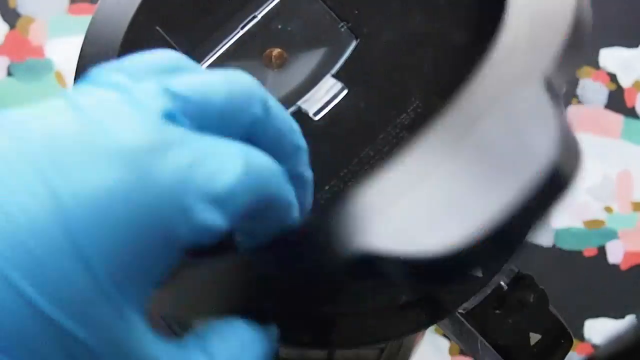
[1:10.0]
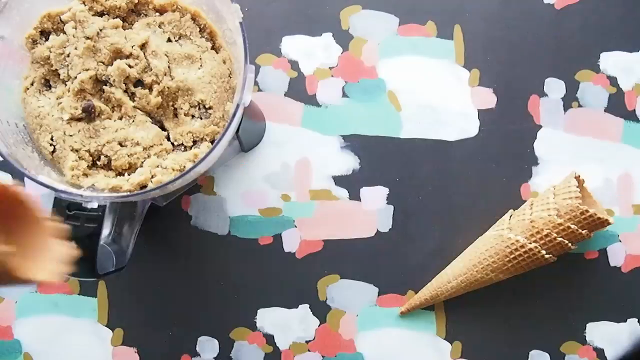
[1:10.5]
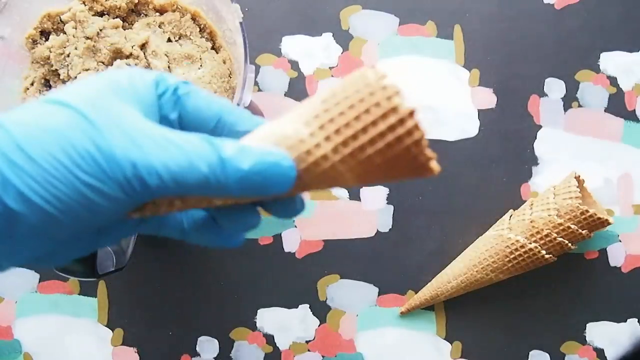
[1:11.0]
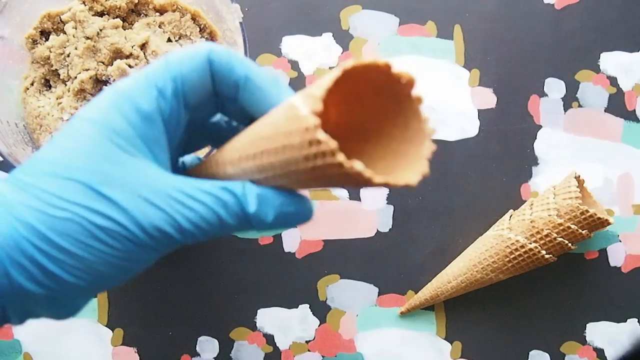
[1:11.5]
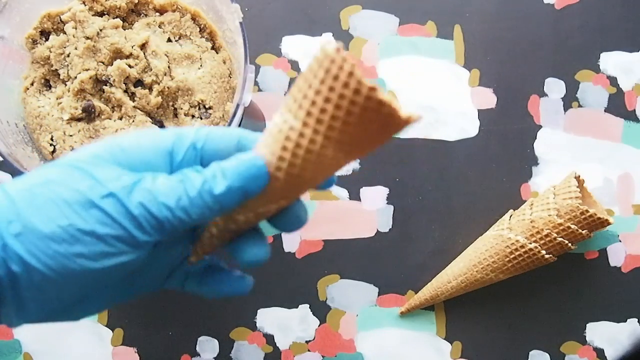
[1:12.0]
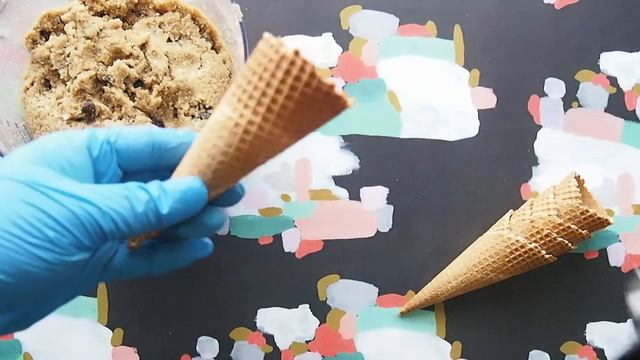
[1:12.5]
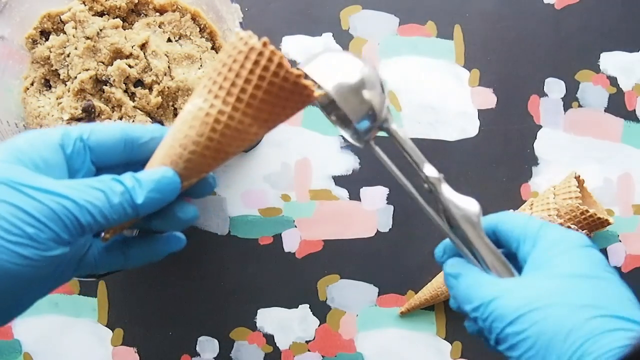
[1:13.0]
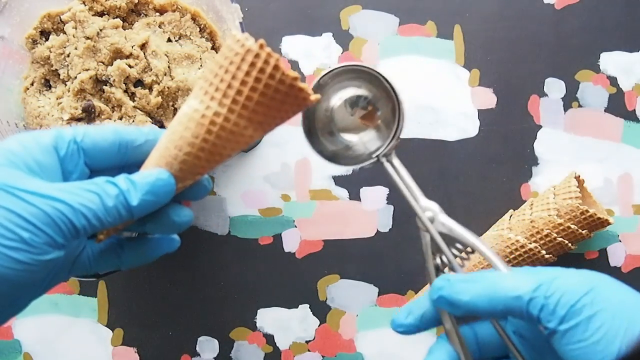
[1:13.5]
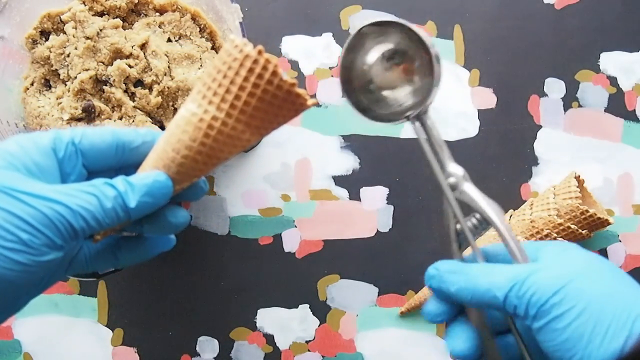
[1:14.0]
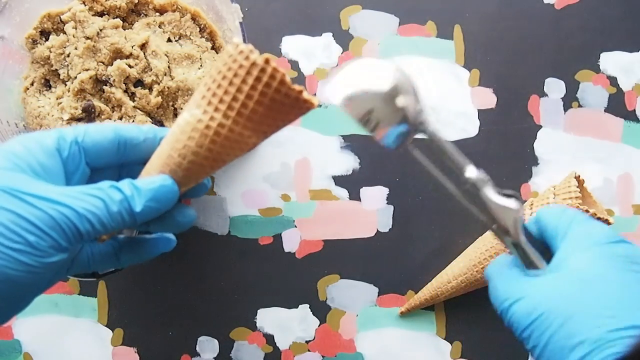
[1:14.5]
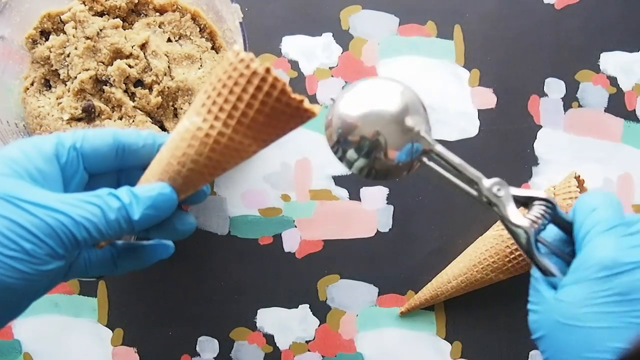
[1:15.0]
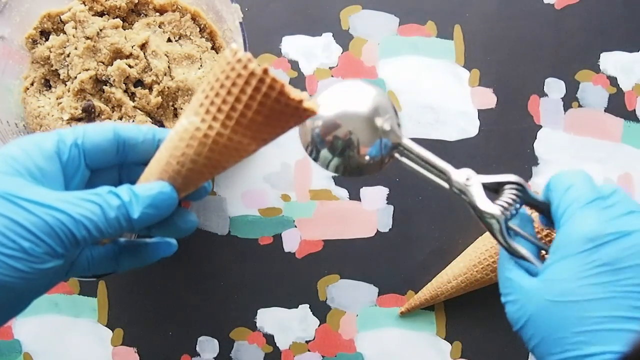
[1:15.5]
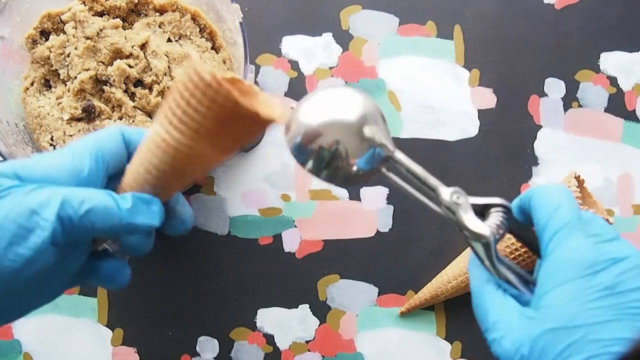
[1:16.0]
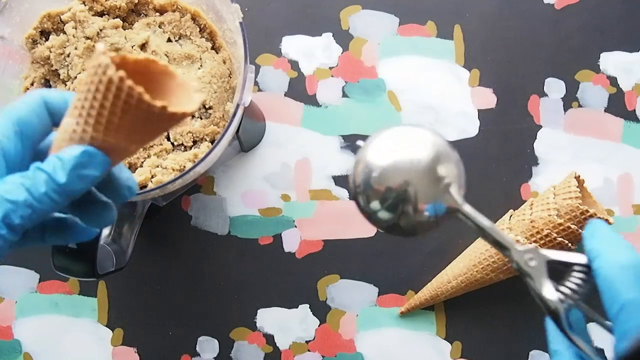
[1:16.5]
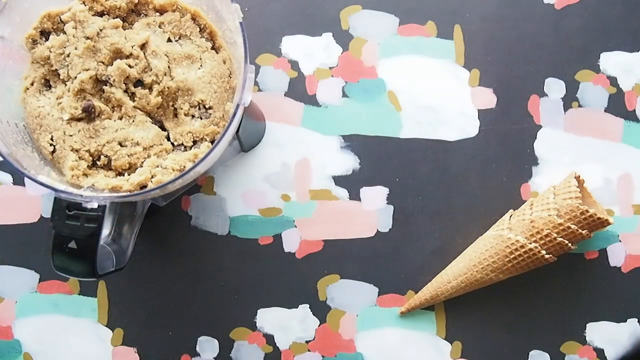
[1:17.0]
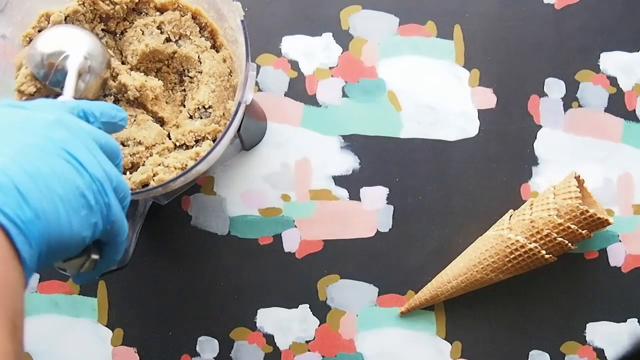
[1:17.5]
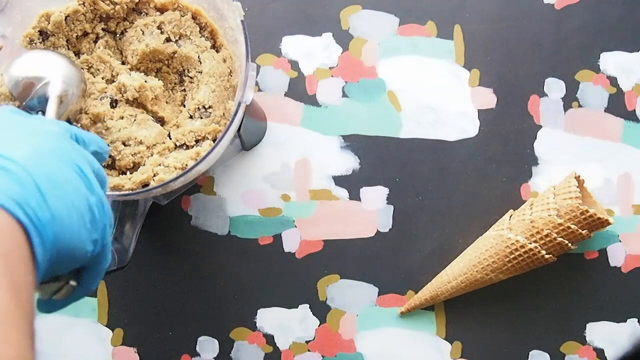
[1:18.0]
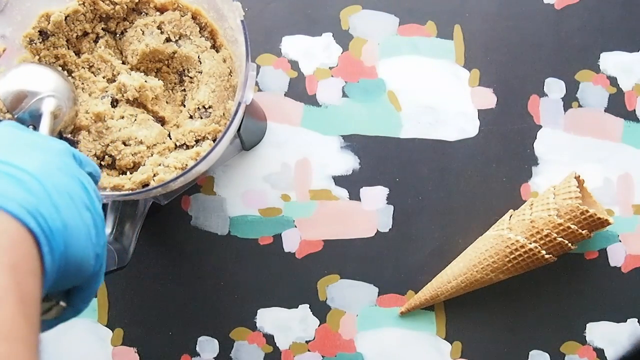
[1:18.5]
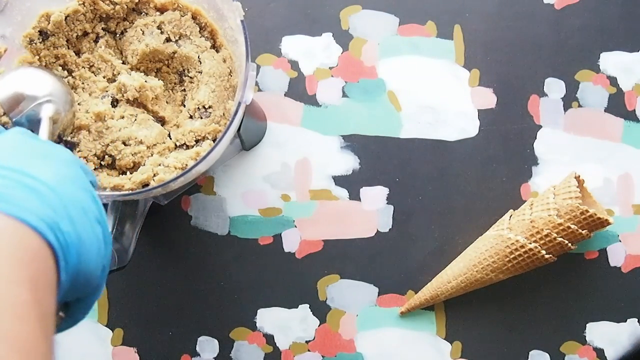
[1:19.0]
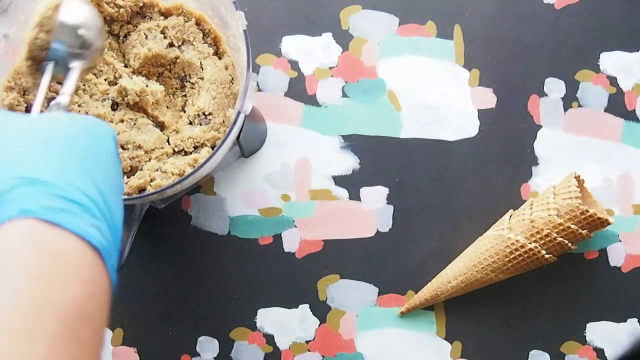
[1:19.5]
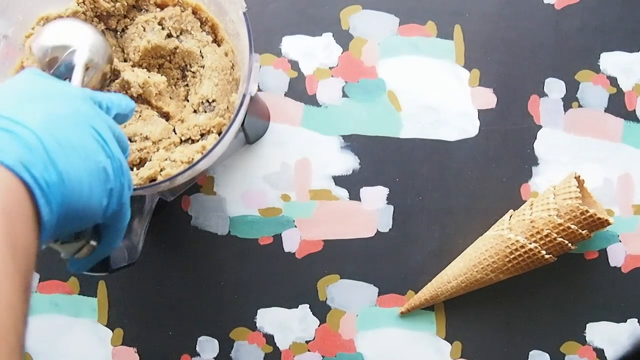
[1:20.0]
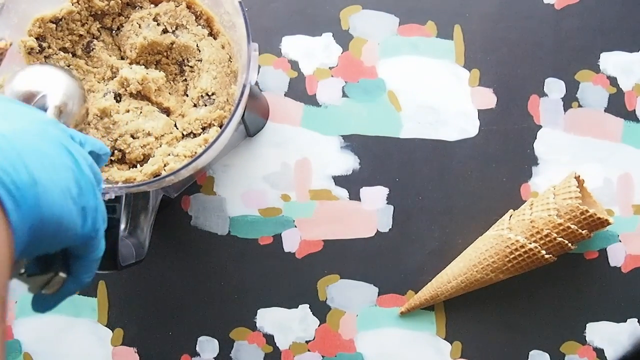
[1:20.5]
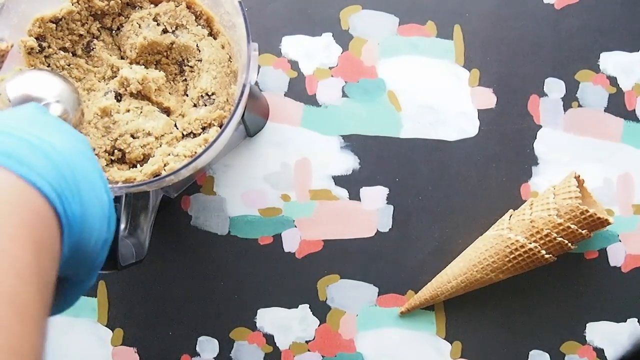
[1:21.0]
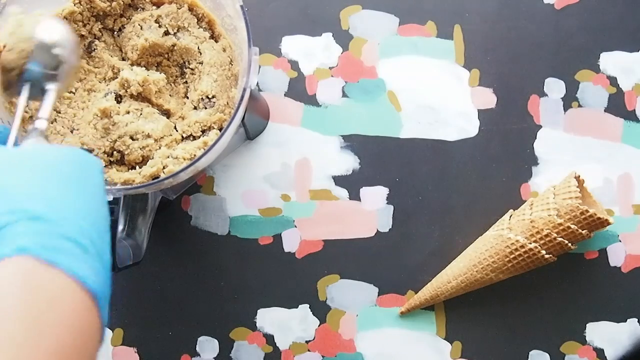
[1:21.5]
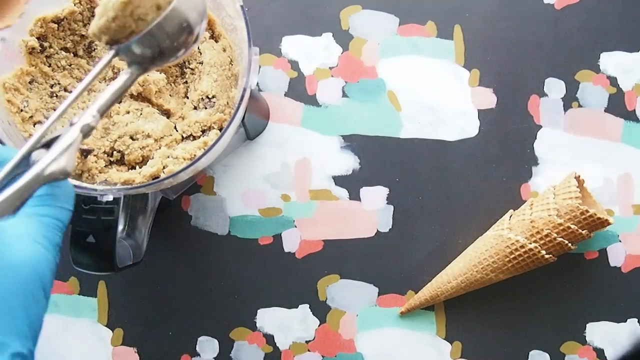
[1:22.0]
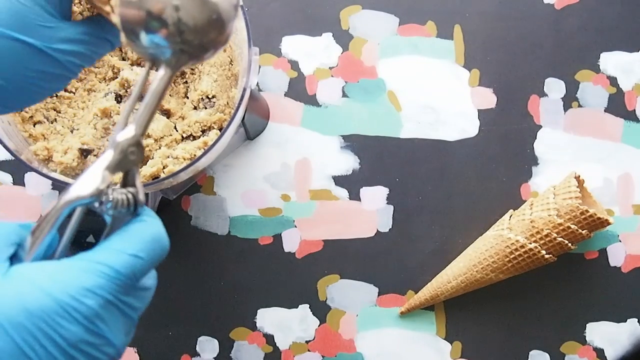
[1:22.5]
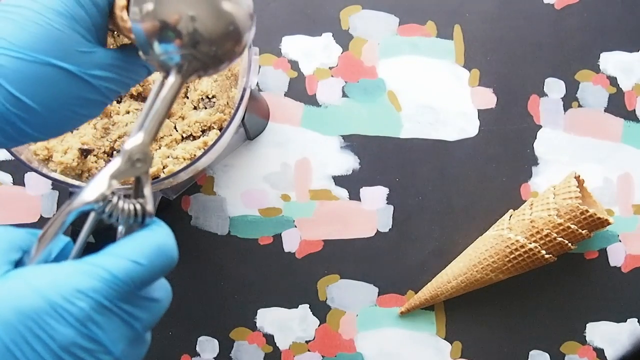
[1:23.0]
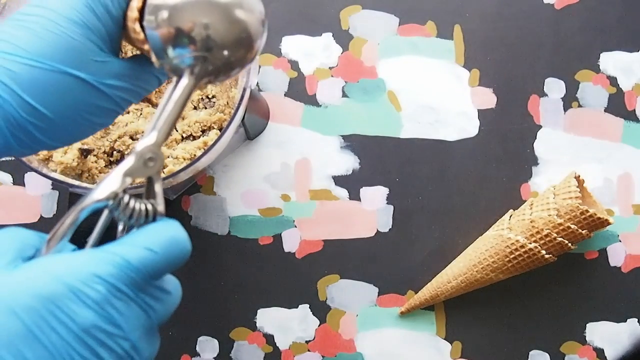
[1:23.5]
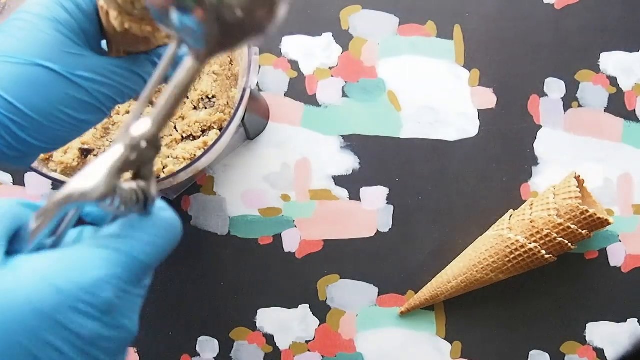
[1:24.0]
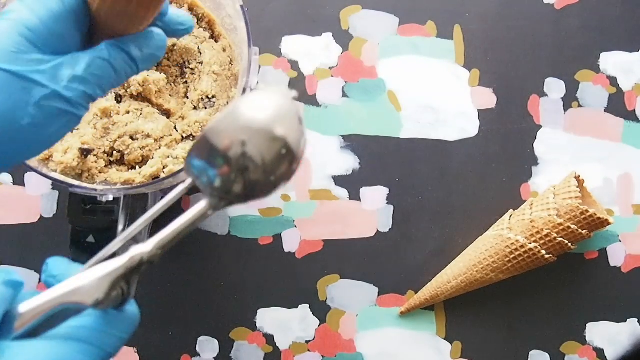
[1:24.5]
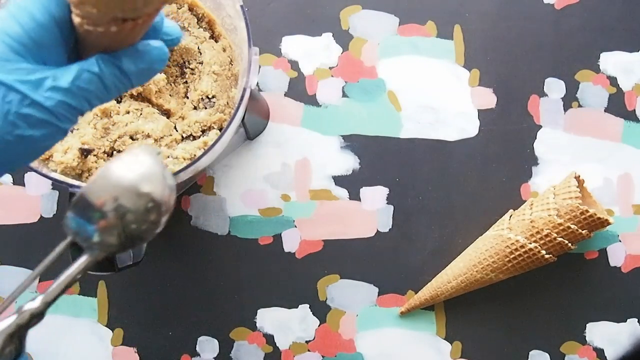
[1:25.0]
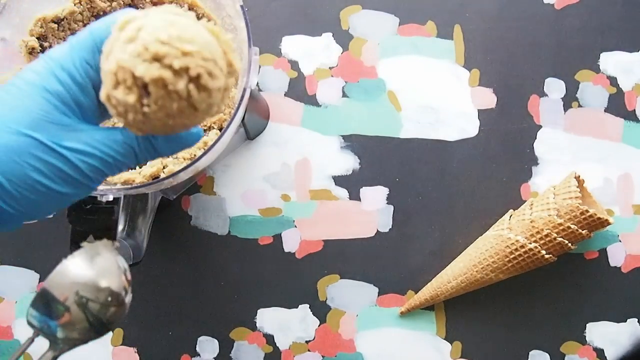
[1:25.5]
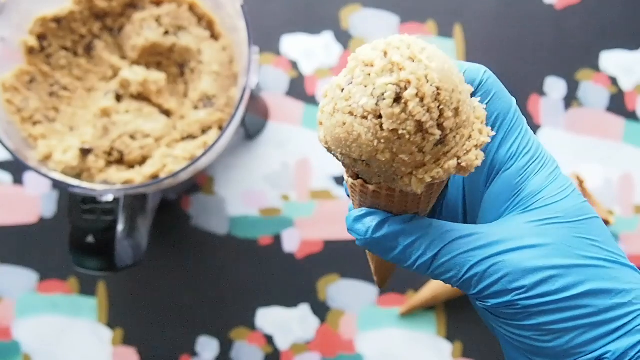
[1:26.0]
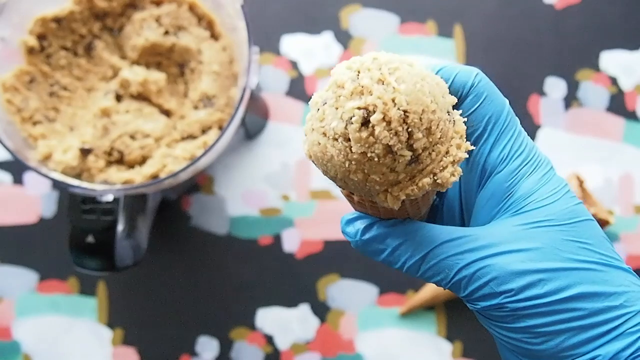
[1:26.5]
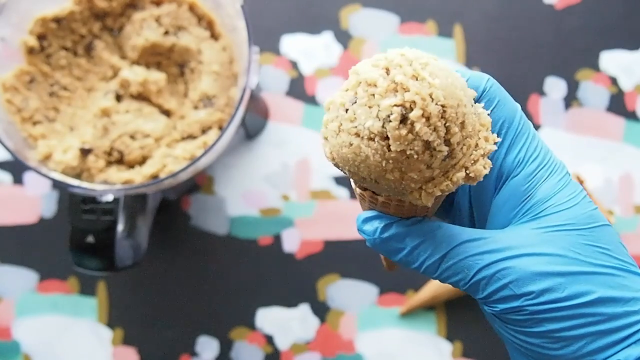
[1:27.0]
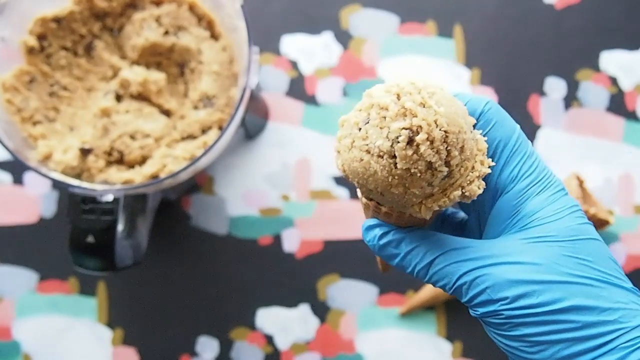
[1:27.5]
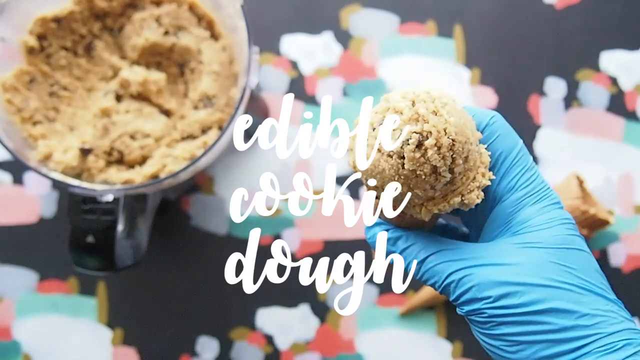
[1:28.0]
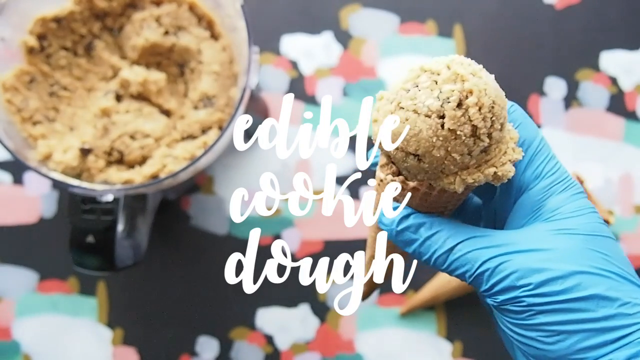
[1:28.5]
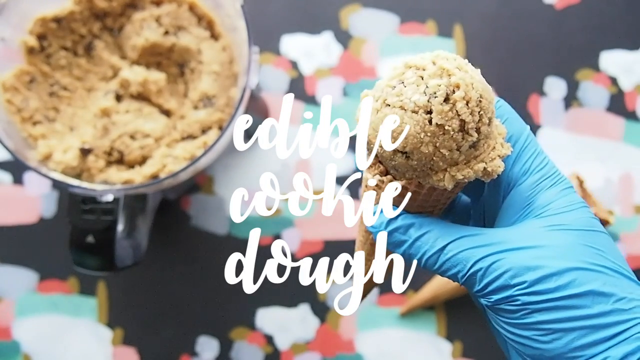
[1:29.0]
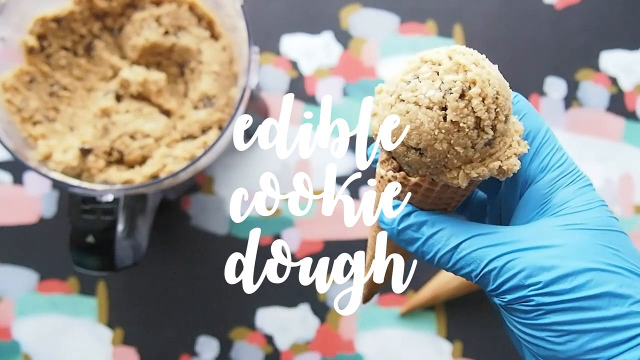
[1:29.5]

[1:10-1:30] All the ingredients are blended and mixed together. The man in the gloves takes a cone and scoops the mixture with a scooper, placing it in the cone. The brownish edible cooking dough is visible in the cone. The words "edible cooking dough" appear on screen in bold white, and the person in the blue gloves holds the cone with the edible cooking dough and shows it to the camera.